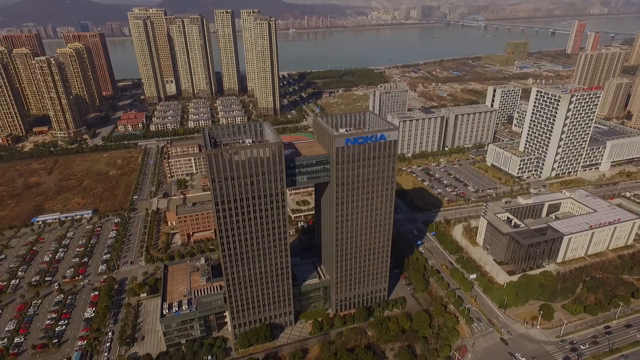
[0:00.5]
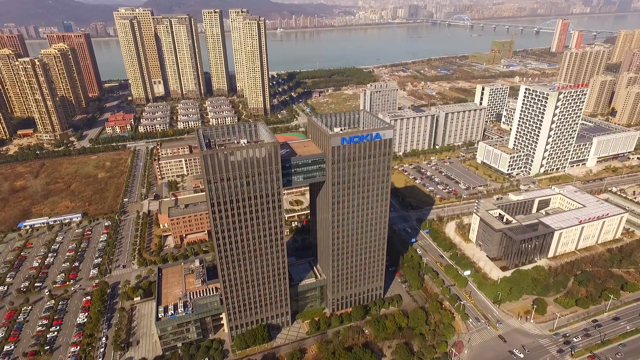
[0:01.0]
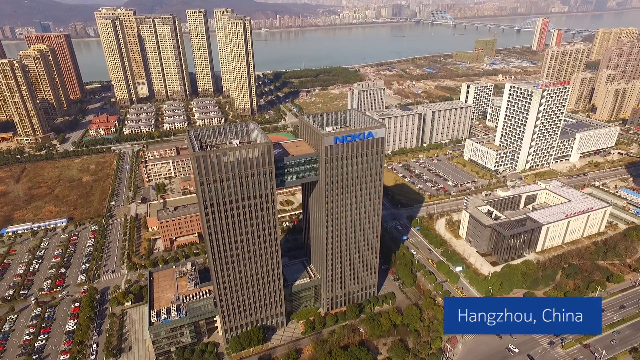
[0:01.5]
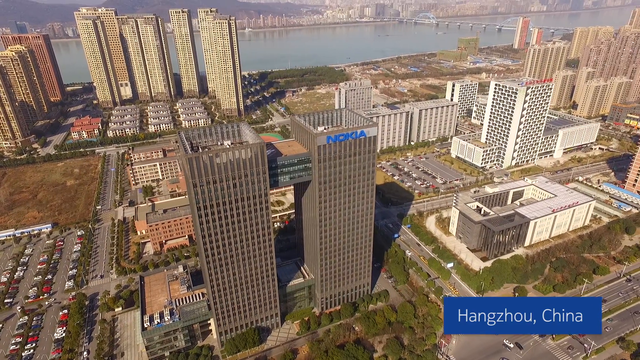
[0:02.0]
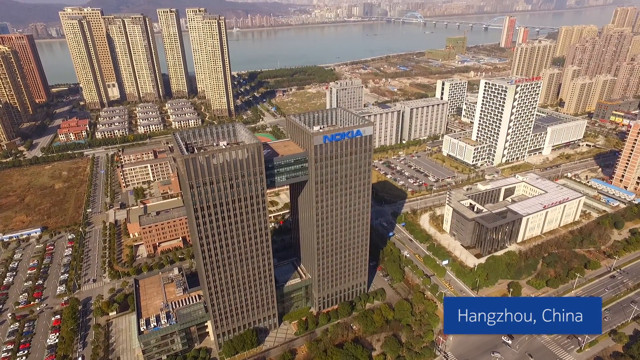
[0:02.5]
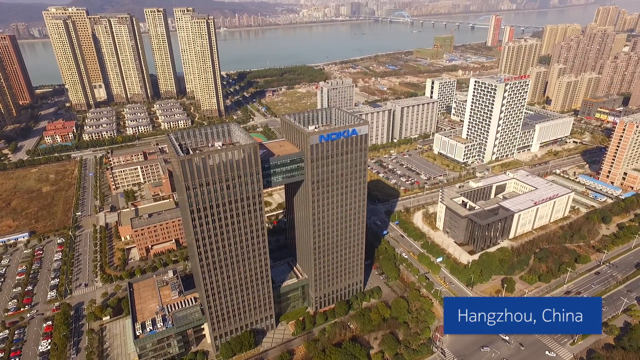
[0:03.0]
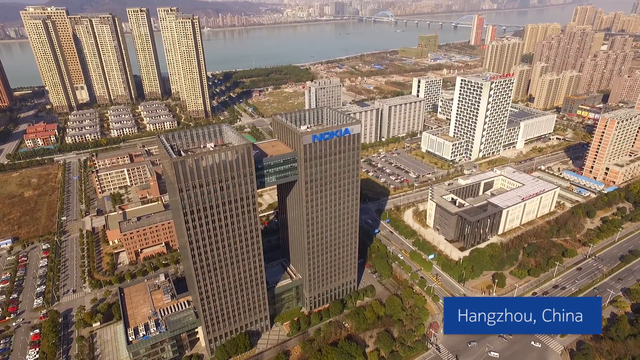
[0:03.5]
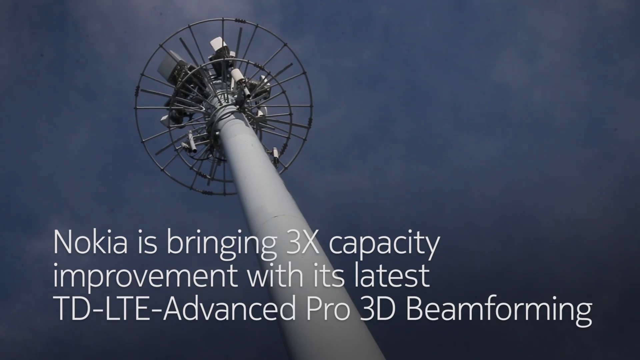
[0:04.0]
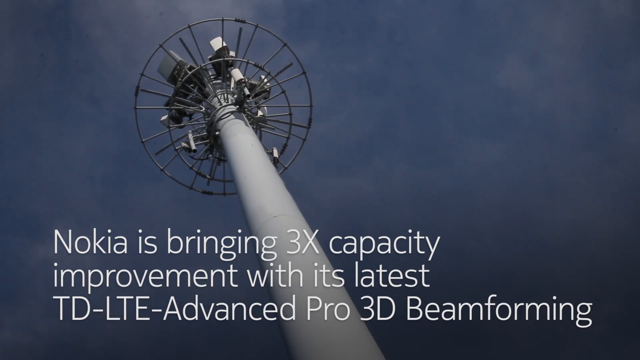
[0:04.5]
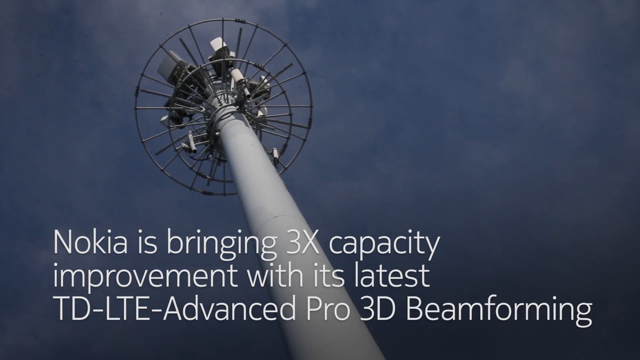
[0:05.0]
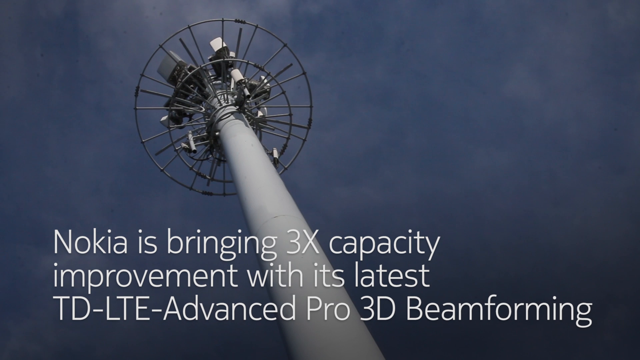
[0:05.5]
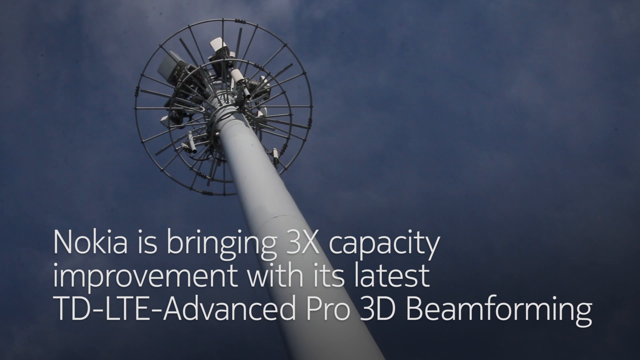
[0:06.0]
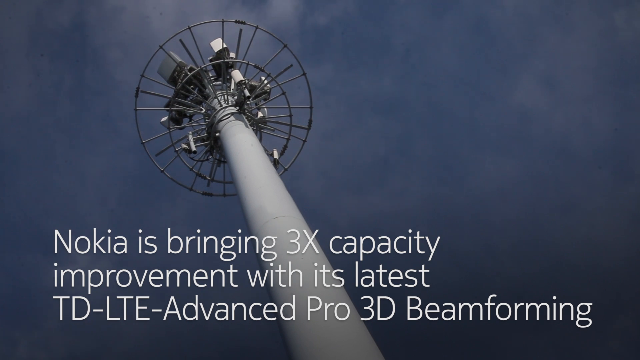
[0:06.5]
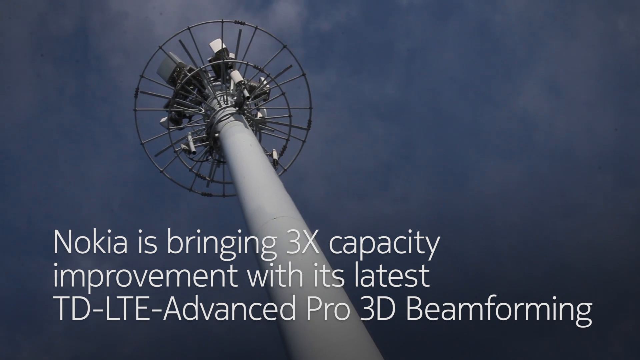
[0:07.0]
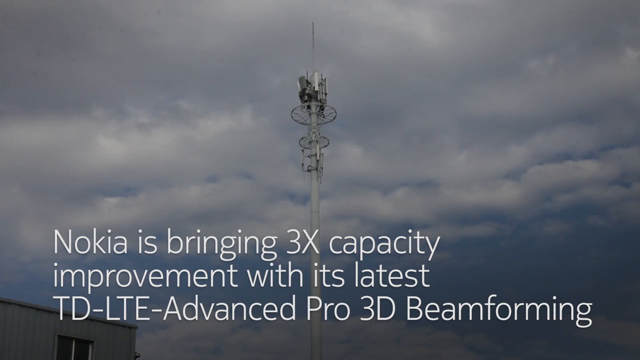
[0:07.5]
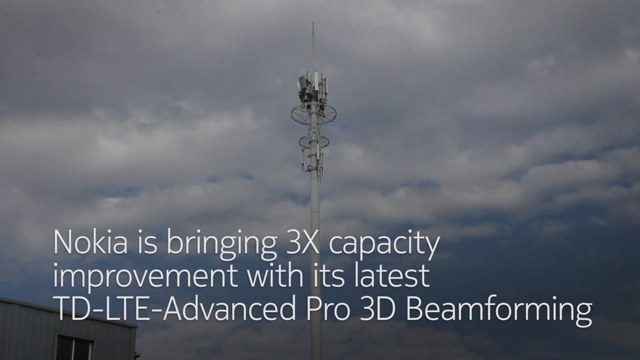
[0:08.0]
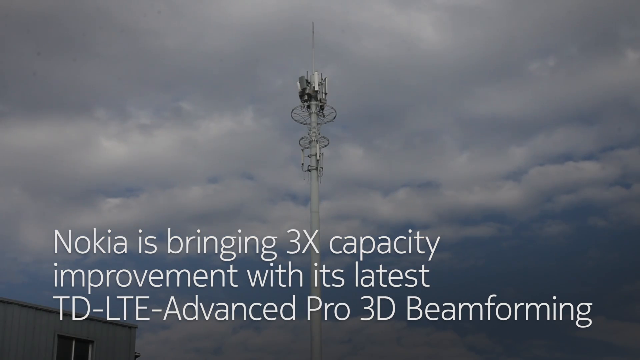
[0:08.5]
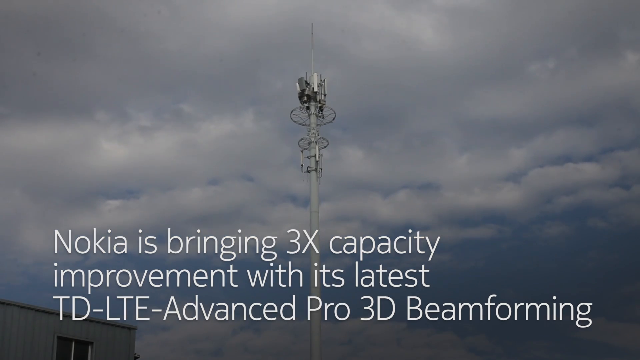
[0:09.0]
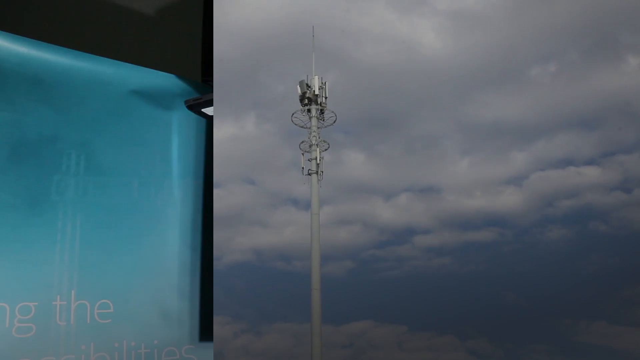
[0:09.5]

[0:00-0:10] A panoramic view of a cityscape is seen from above, turning as it plays. In the middle are two tall buildings; the one on the left says "Nokia" in blue, black letters at the very top. In the left-hand corner of the screen a blue rectangle box appears, giving the city: "Hangzhou, China" in thin white block letters. As the cityscape continues turning, a tower that looks like a satellite tower comes into view, and at the bottom of the screen thin white block letters read "Nokia is bringing three times capacity improvement with its latest TD LTE-Advanced Pro 3D beamforming."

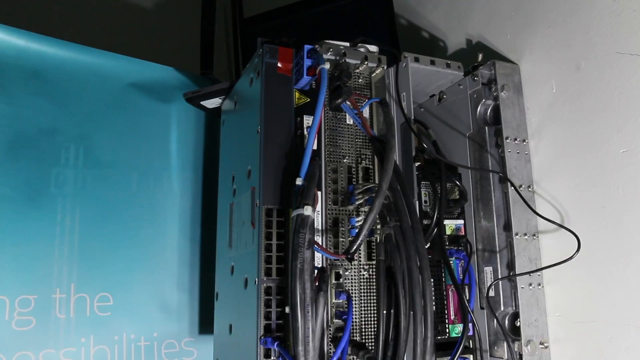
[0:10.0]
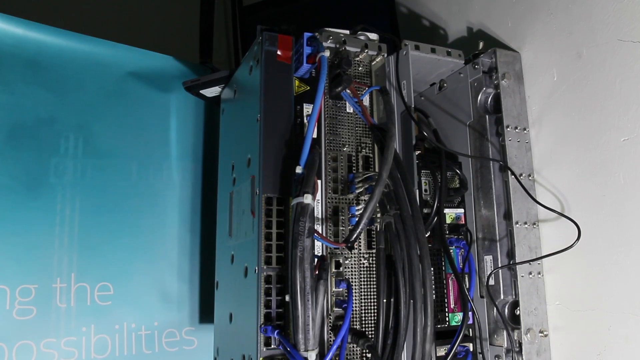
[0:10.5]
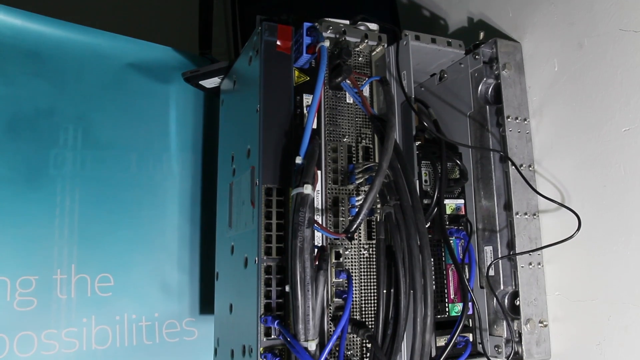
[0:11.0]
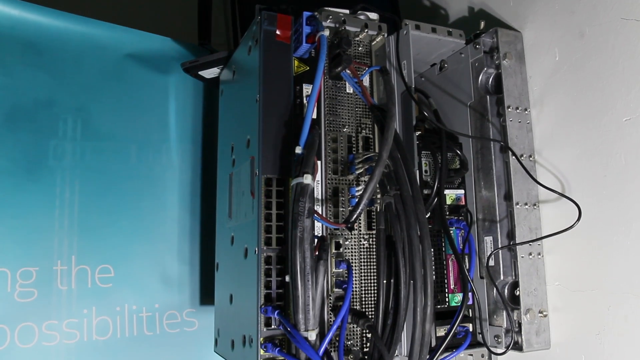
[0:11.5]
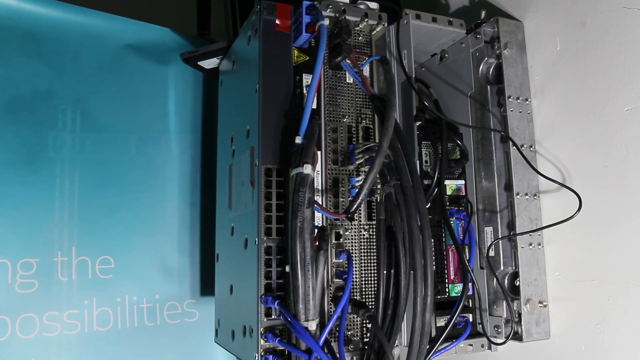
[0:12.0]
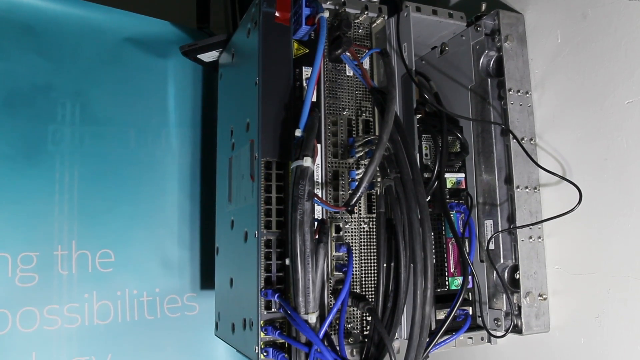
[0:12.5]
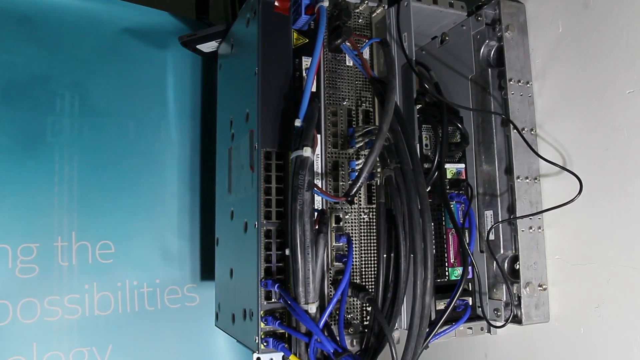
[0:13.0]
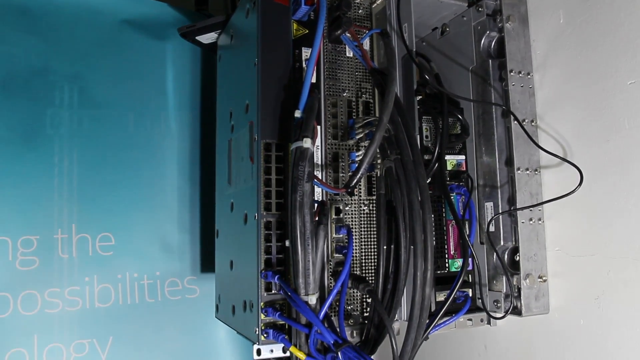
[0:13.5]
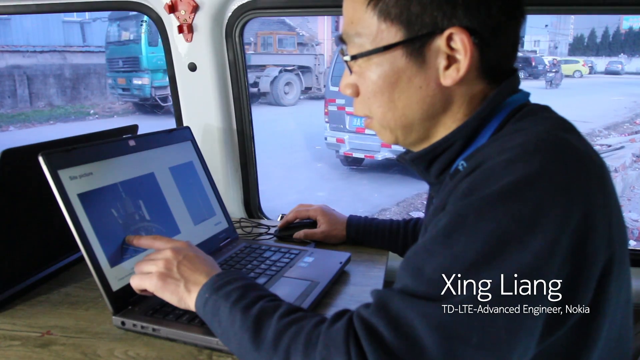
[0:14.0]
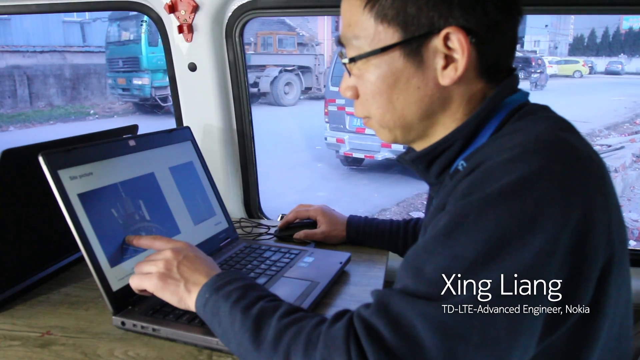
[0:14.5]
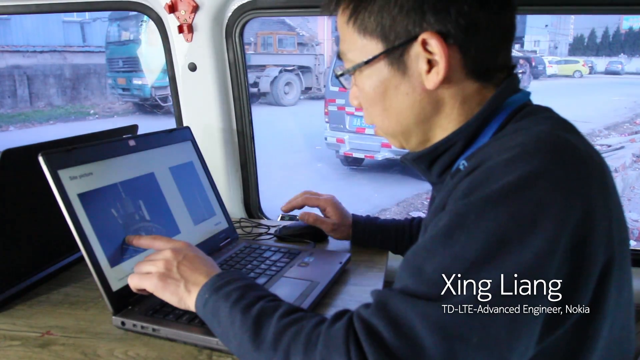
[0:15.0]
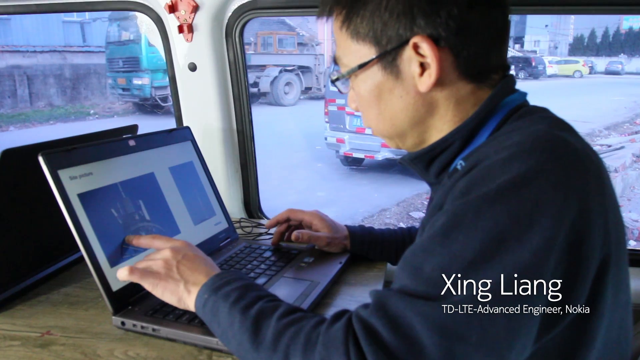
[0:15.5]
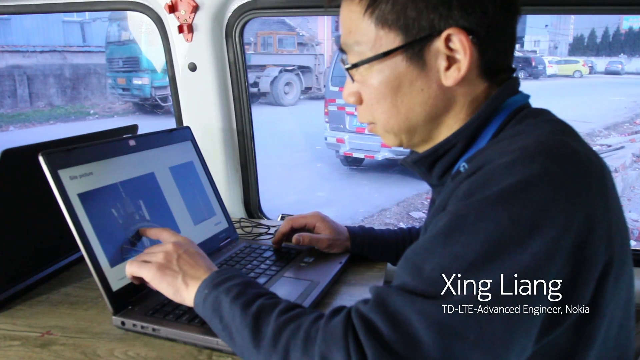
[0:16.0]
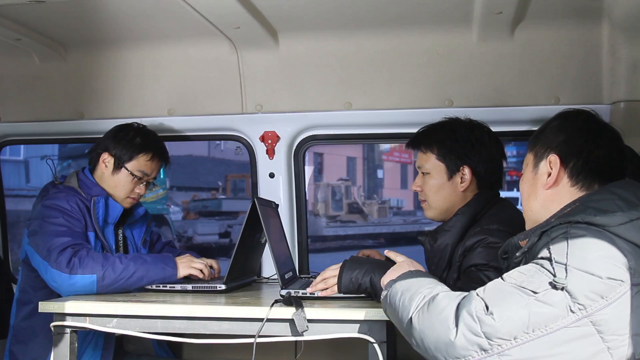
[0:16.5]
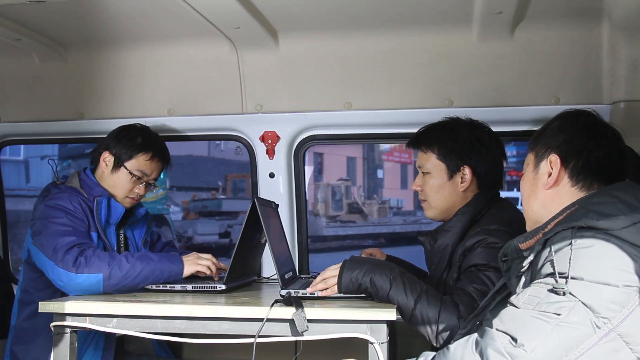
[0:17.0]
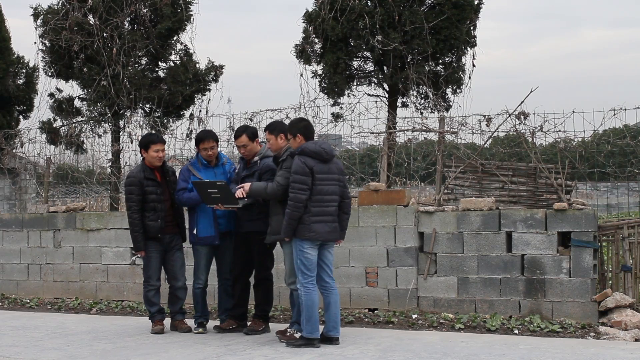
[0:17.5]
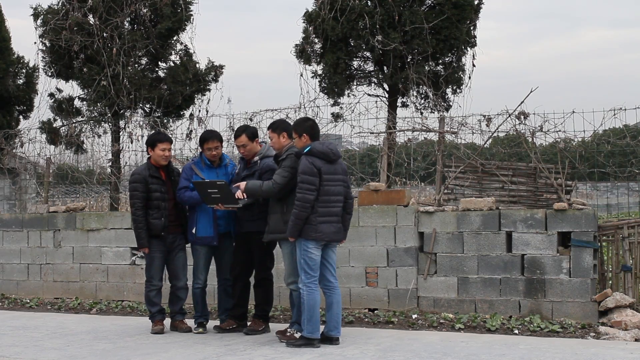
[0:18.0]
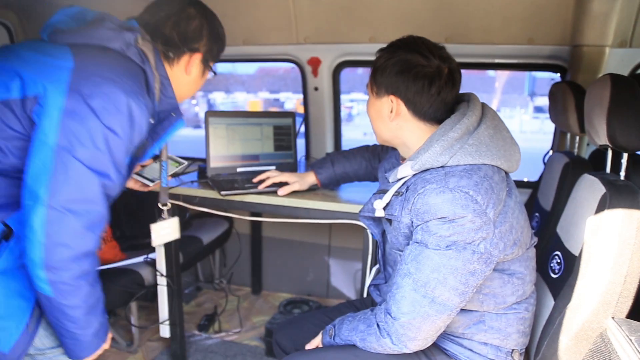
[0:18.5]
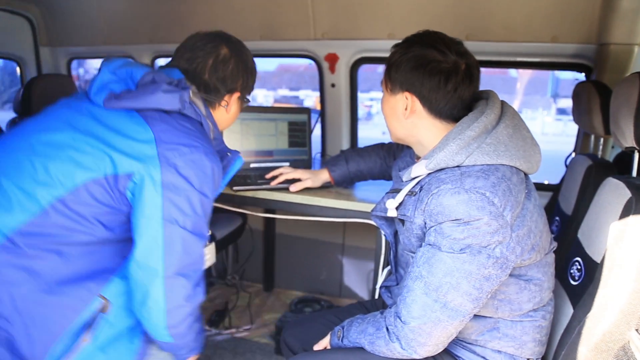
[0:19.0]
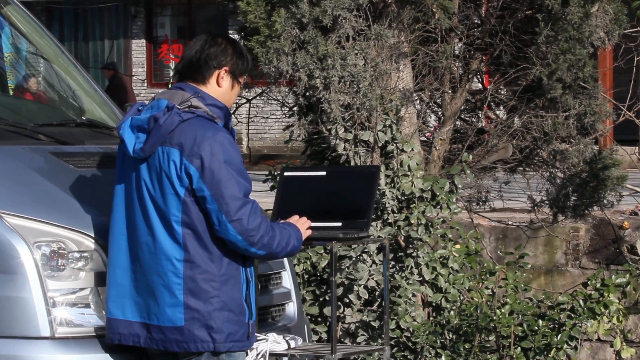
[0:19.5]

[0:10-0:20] A blade server with wires hanging out of it is shown. Next comes a Chinese man, probably in his 40s, with short dark hair, seen in side profile. He wears glasses and a blue sweater, looks at a laptop, and has his hand close to it, pointing his finger at what appears to be the satellite. The screen switches to three Chinese men, apparently in their 20s or 30s, looking over laptops: two on the left share one laptop, and the one on the right, who has glasses, is on another. All have short dark hair and wear puffy black winter jackets. The screen then changes to five men standing around a laptop outside, one pointing at its screen; they appear to be at a construction site. The sky is overcast, there are two trees close to them, and they stand in front of a bunch of stone construction blocks. Different images of people using a laptop follow, then the three men sitting at the table return. Finally a Chinese man is seen from the back, apparently in his twenties or thirties; the side of his face shows he wears glasses. He stands outside in front of a car in a light jacket in two shades of blue, lighter and darker, working on a laptop.